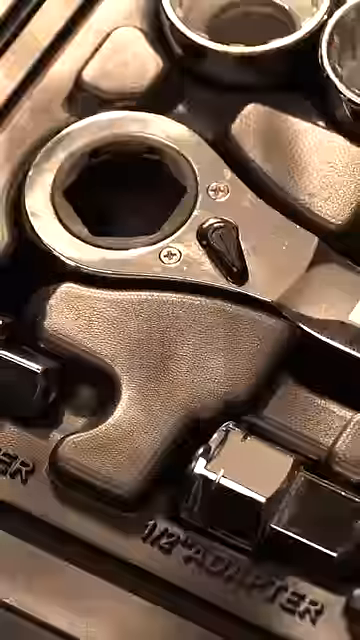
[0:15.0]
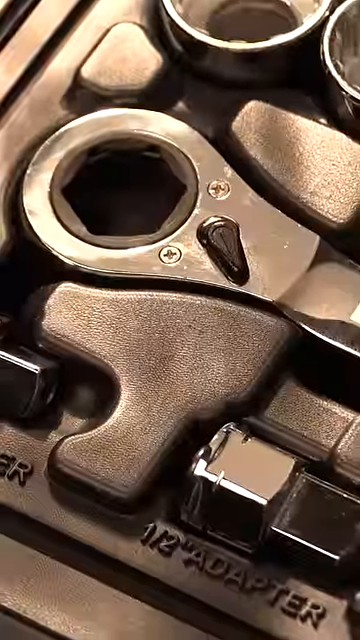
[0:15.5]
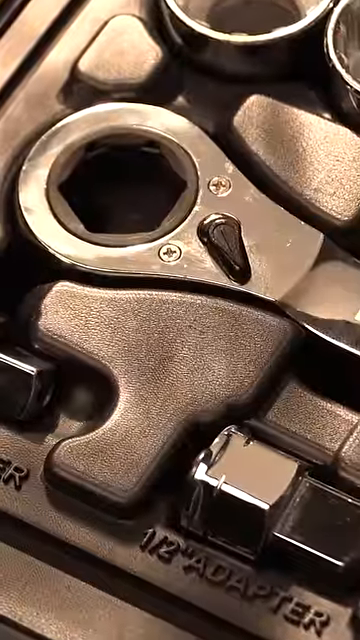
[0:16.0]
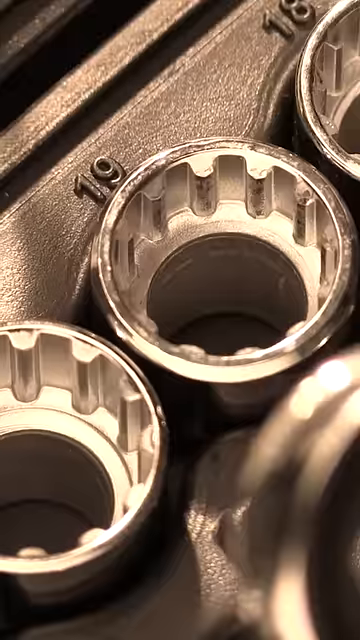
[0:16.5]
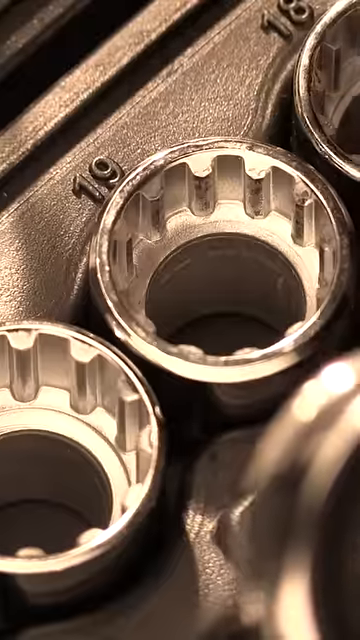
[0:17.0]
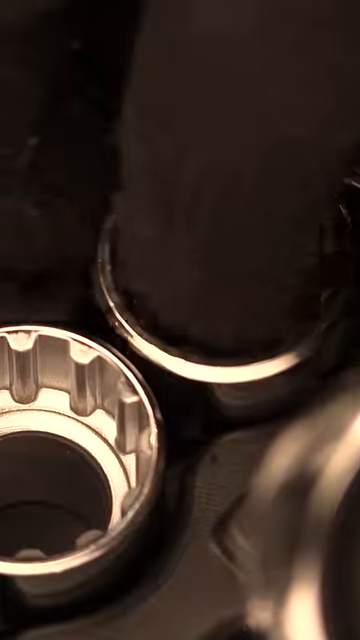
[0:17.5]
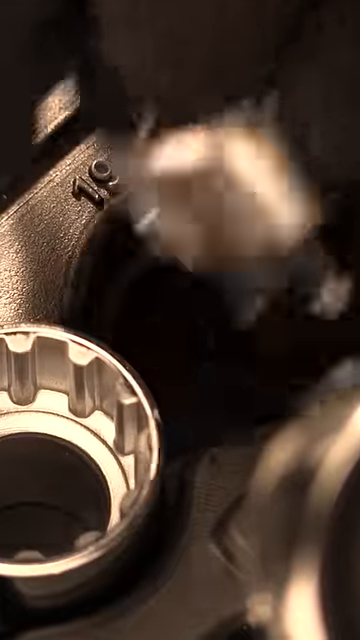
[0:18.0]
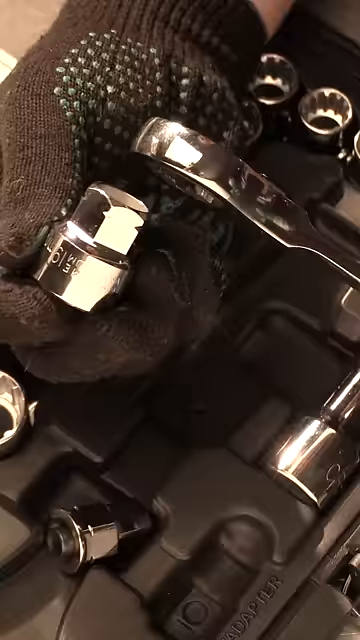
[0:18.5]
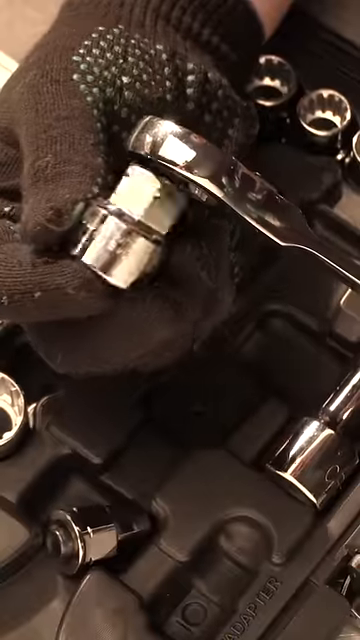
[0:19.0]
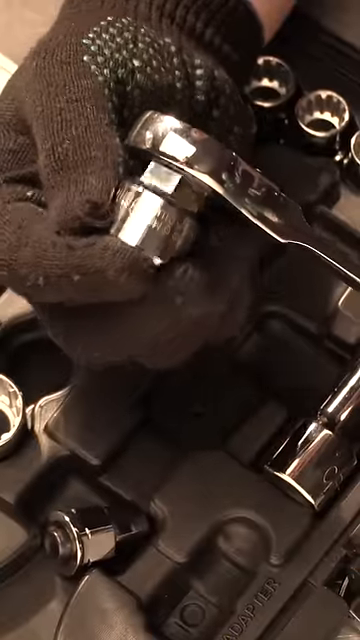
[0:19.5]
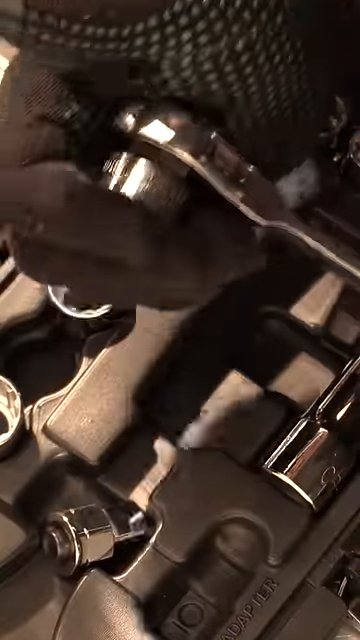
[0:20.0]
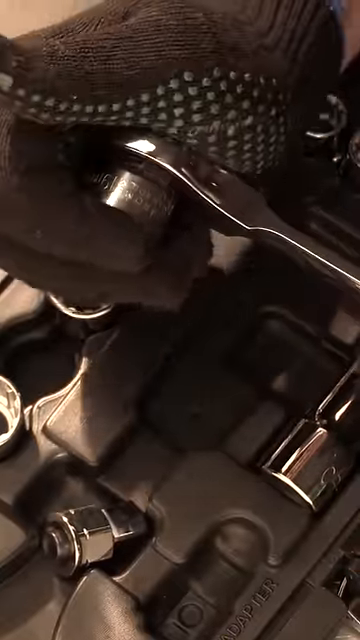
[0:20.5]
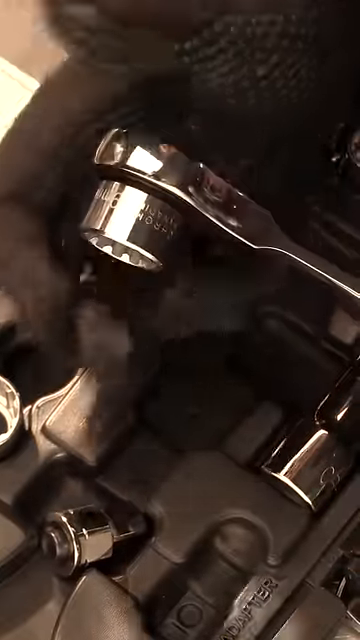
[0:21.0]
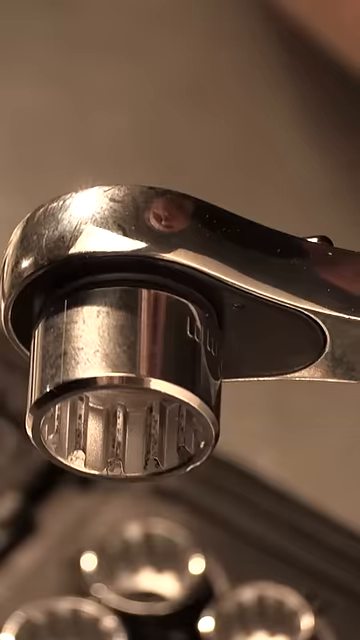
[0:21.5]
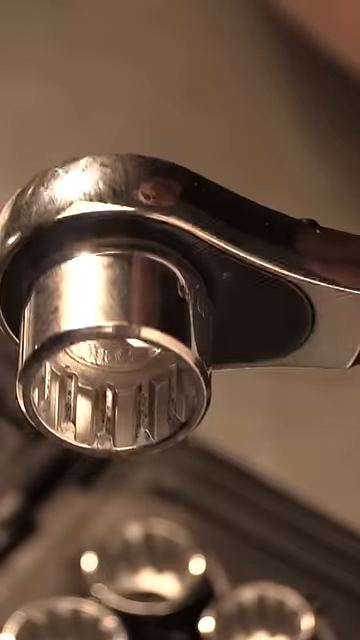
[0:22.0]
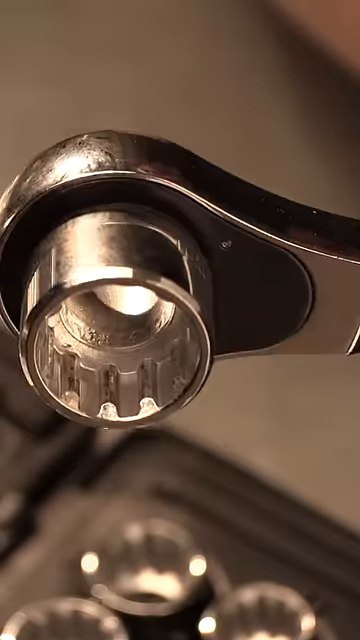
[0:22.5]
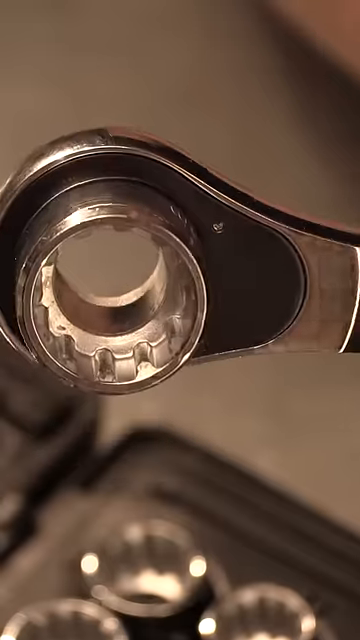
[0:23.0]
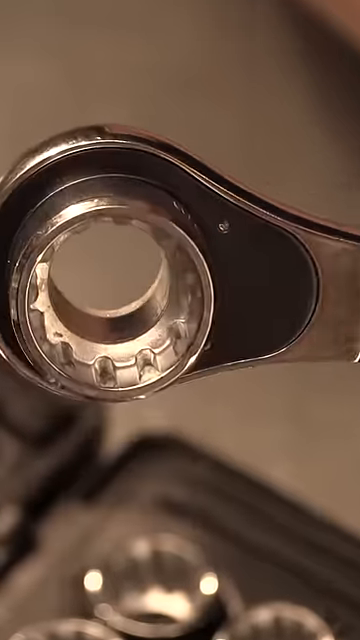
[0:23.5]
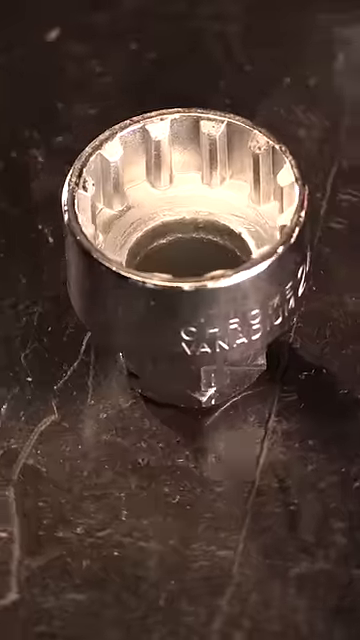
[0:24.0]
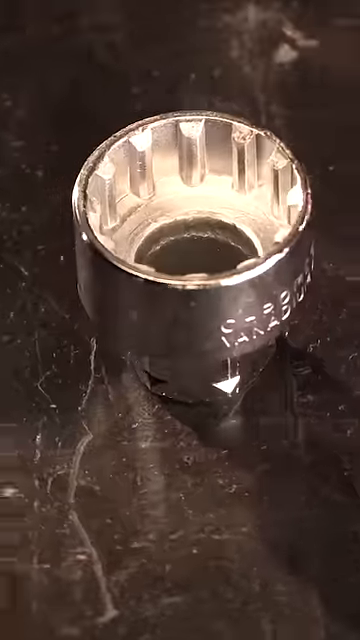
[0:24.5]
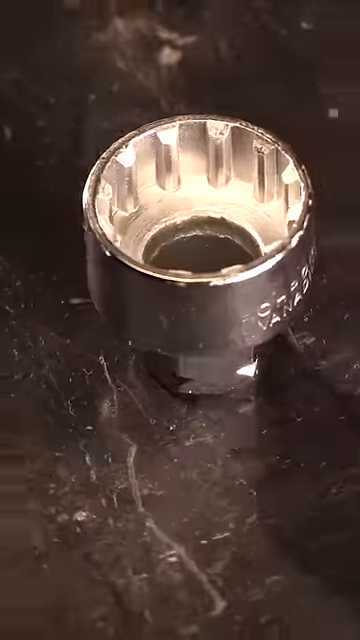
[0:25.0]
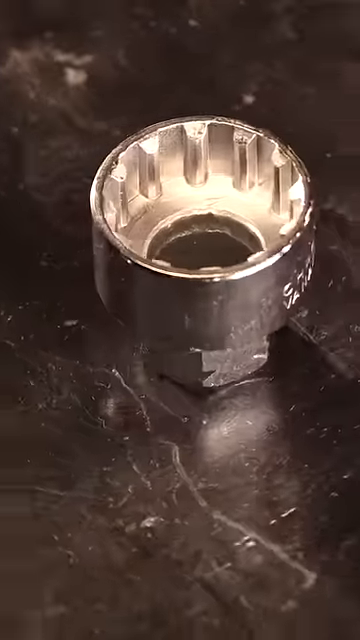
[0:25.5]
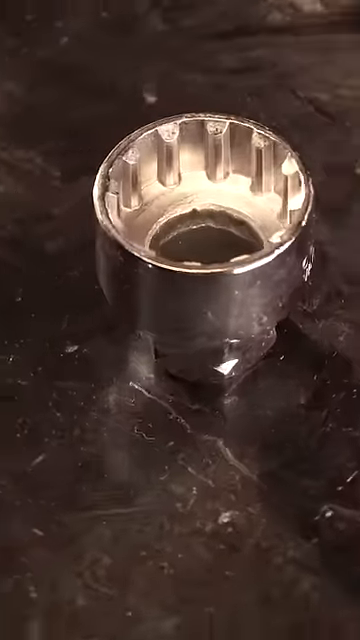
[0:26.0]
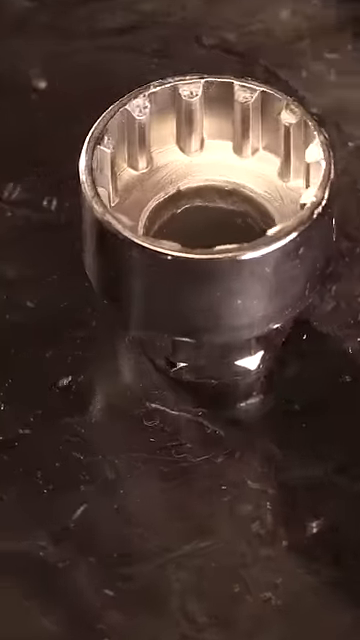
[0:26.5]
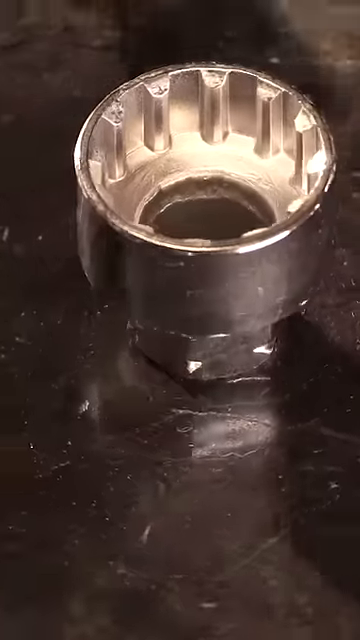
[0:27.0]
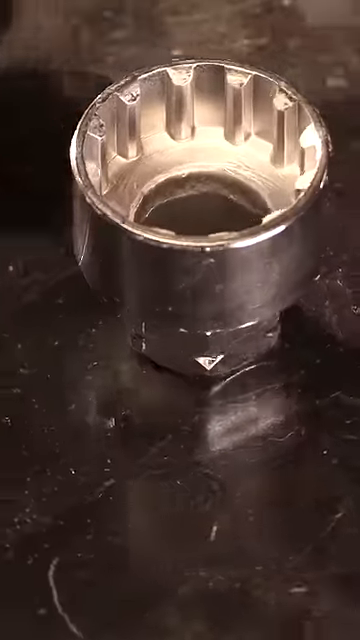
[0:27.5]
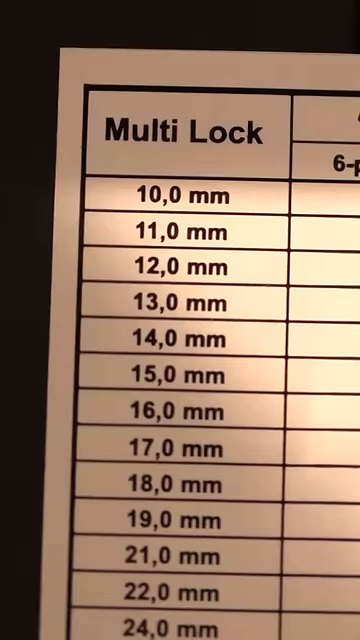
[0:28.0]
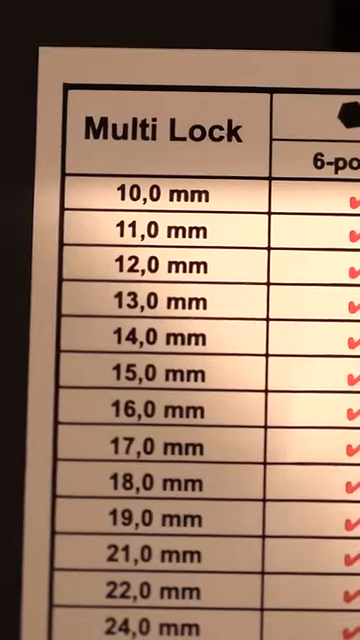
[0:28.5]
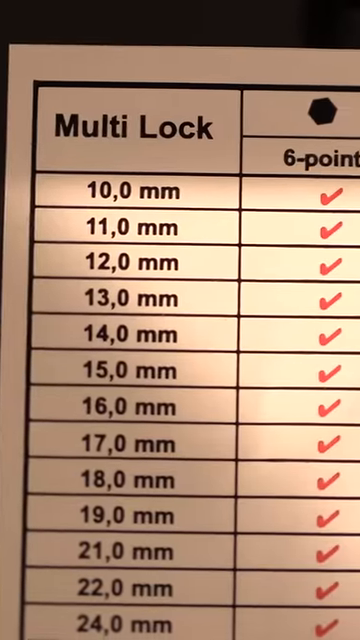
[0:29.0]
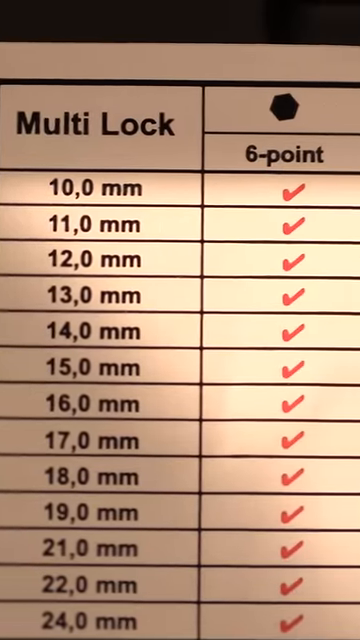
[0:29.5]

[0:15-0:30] A close-up shows a chrome silver ratchet inside its box, surrounded by several different socket attachments. A man wearing black gloves picks up one of the sockets and pops it onto the wrench with ease. A close-up of the wrench with the socket installed follows. Next, a single socket attachment appears by itself on a tabletop in close-up, and the camera rotates 360 degrees around it from above, showing it from all angles. A white socket sizing chart then lists the socket sizes and attachments provided, with each one's size in millimeters and how many points of contact it has; the list starts at 10 millimeters and goes down to beyond 24 millimeters.